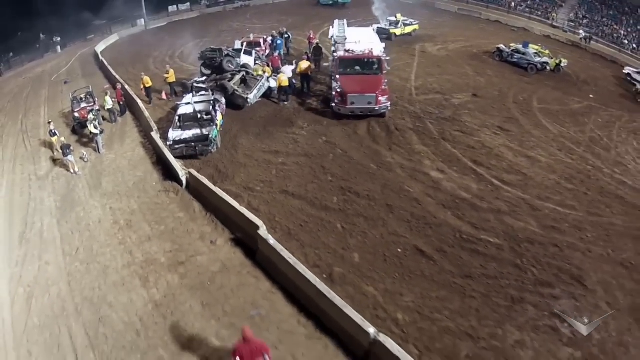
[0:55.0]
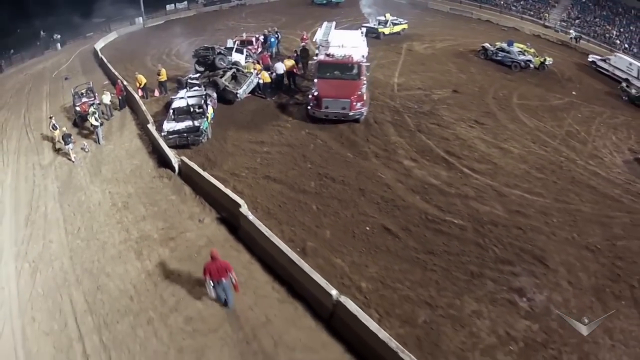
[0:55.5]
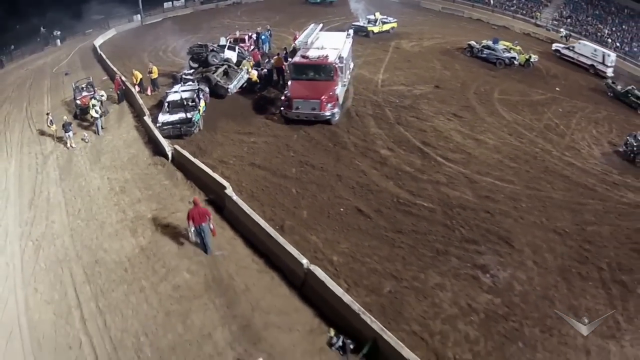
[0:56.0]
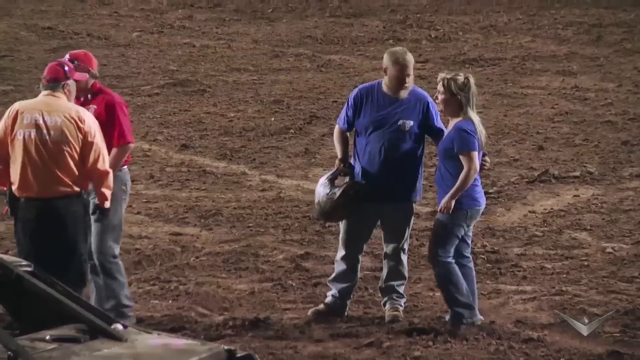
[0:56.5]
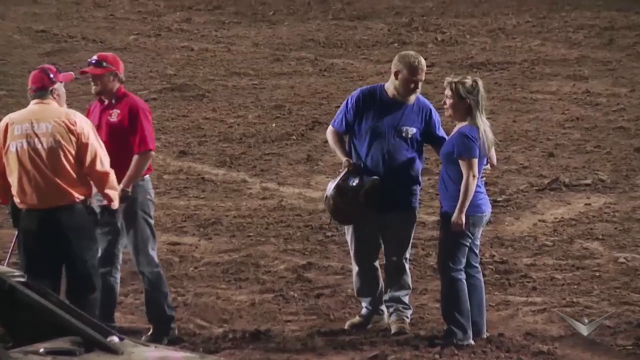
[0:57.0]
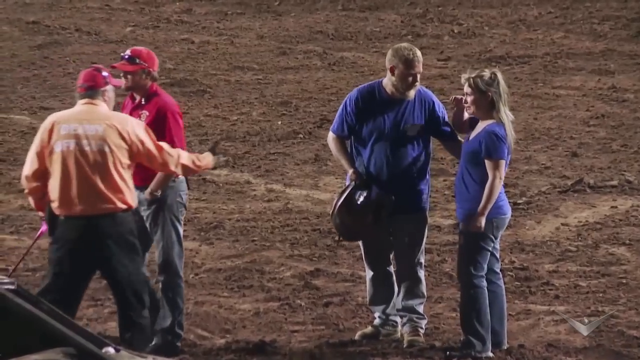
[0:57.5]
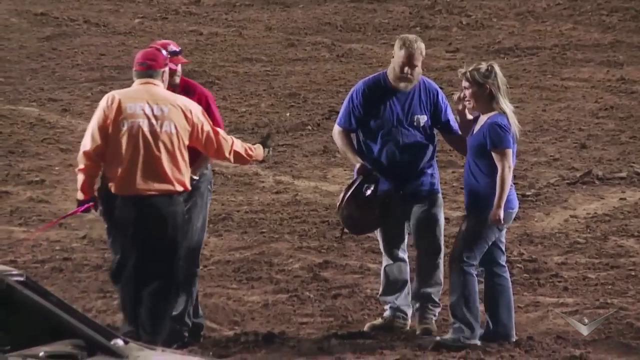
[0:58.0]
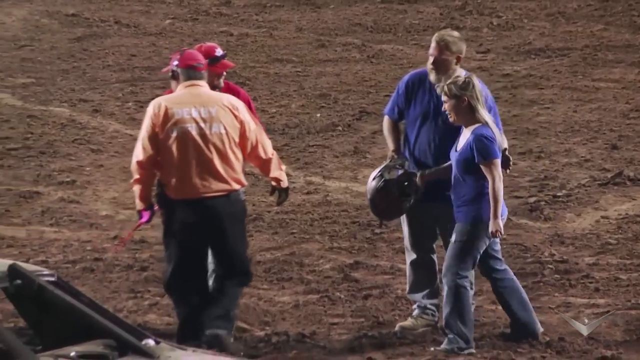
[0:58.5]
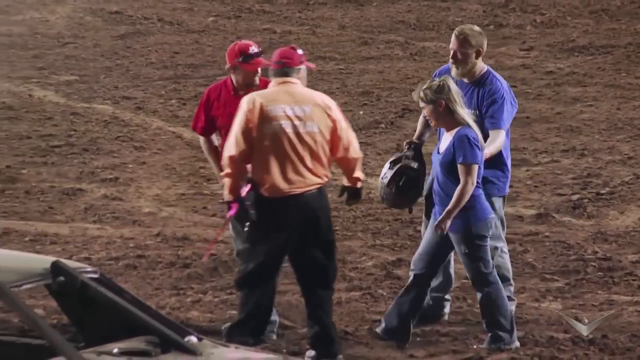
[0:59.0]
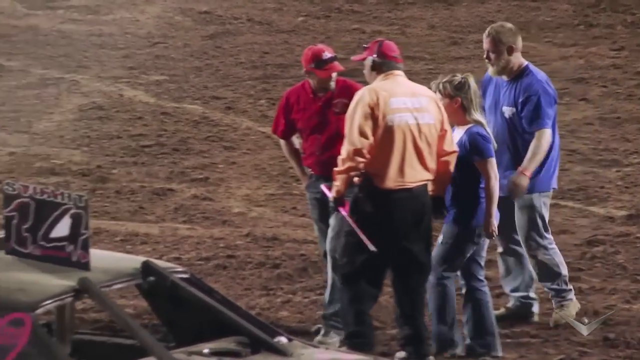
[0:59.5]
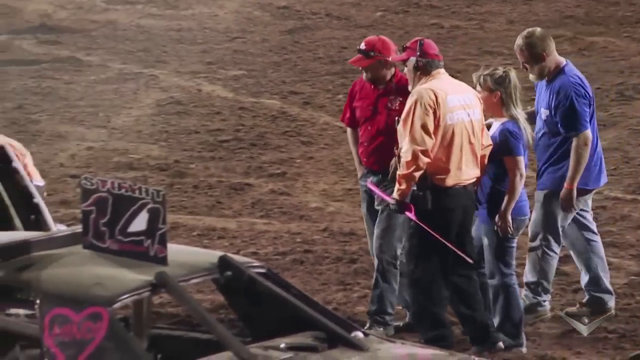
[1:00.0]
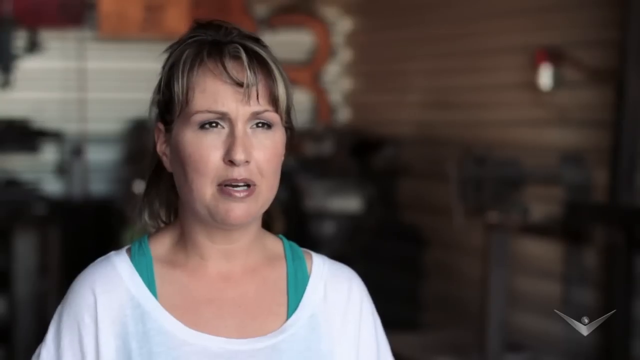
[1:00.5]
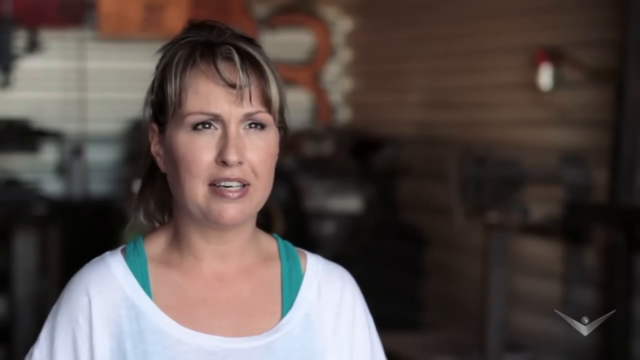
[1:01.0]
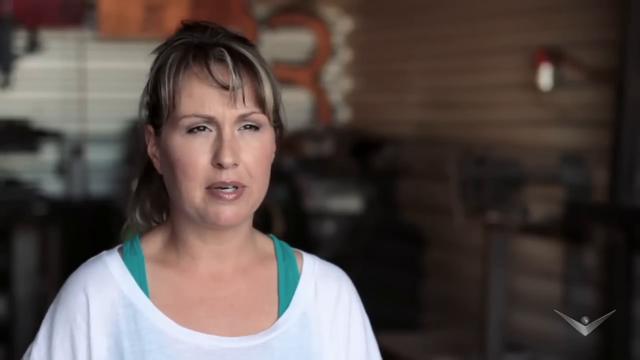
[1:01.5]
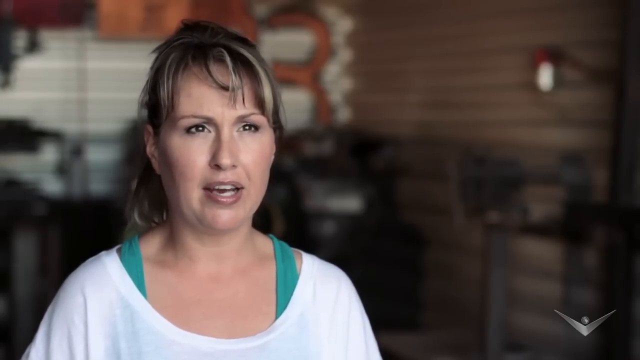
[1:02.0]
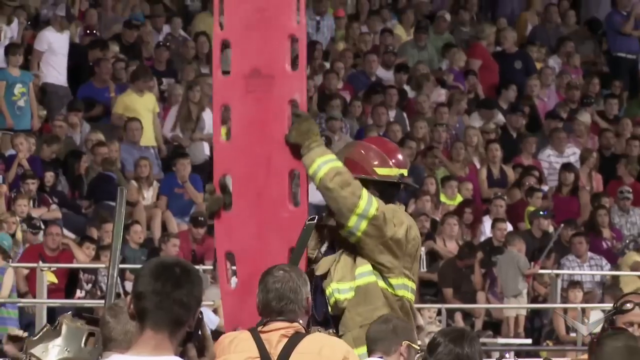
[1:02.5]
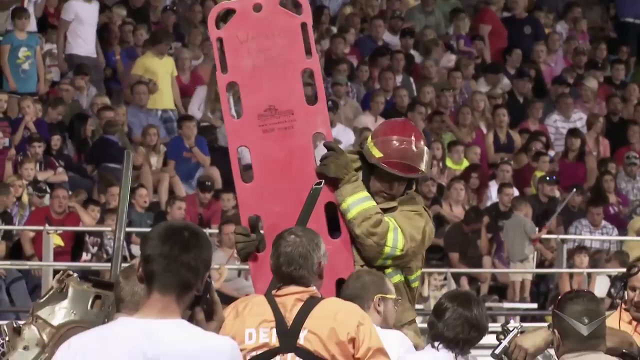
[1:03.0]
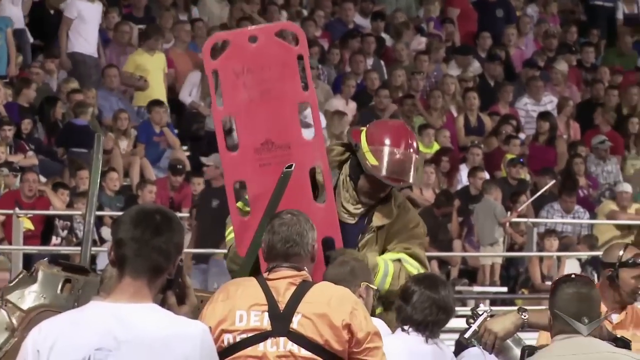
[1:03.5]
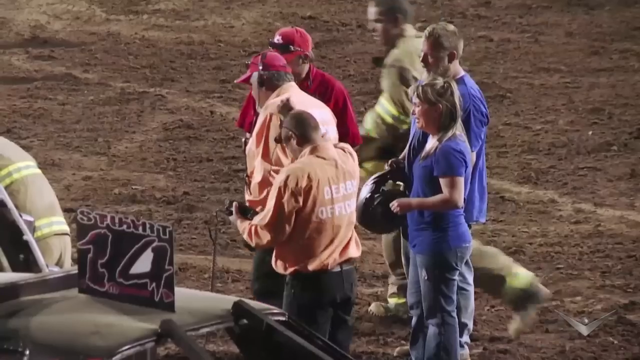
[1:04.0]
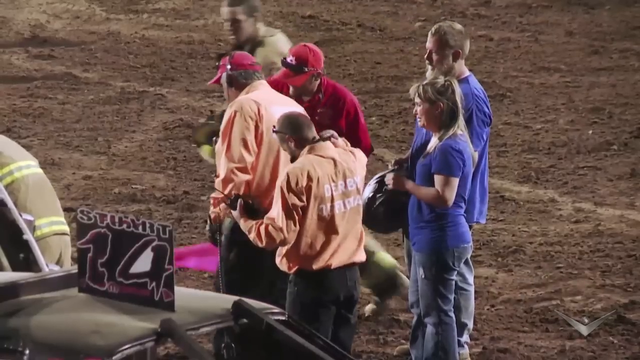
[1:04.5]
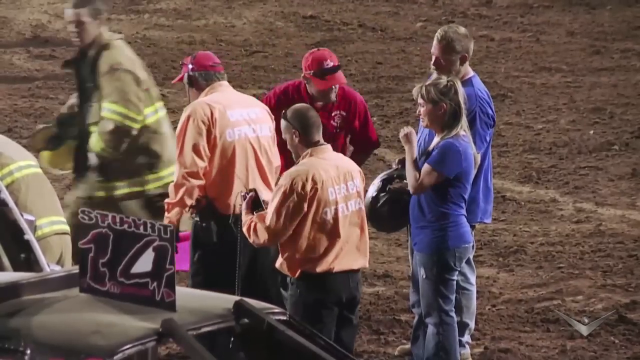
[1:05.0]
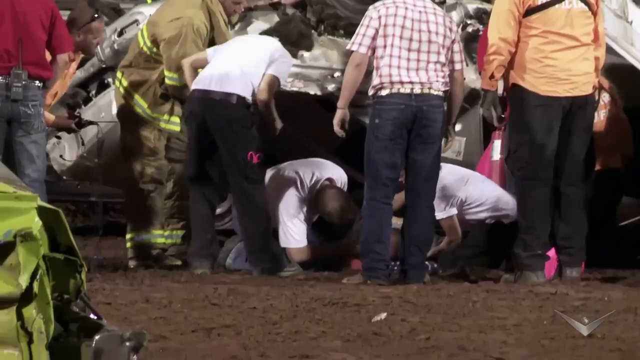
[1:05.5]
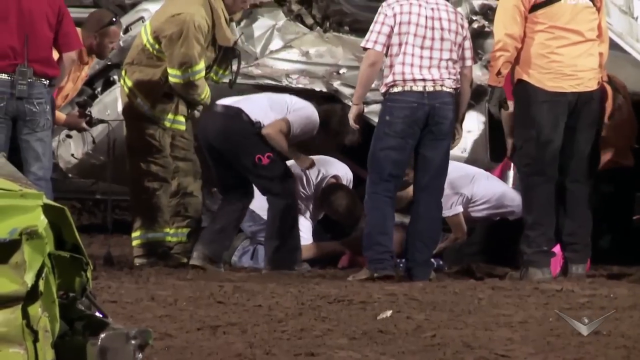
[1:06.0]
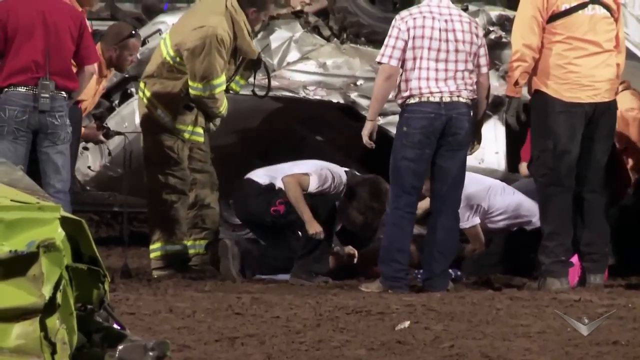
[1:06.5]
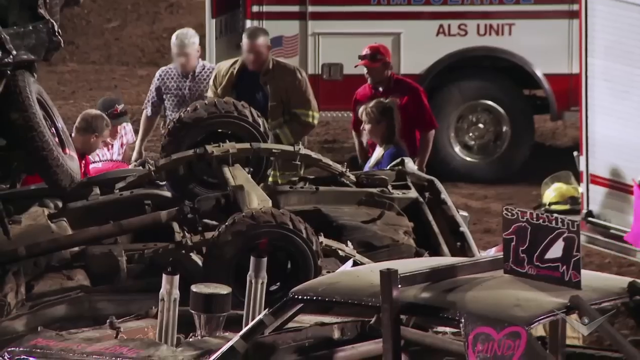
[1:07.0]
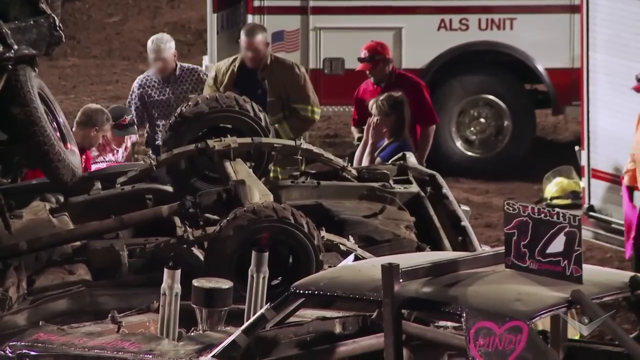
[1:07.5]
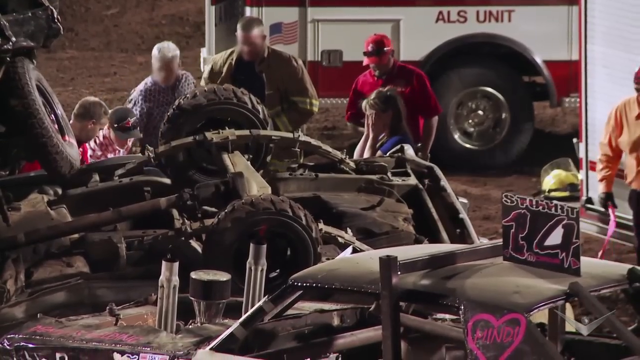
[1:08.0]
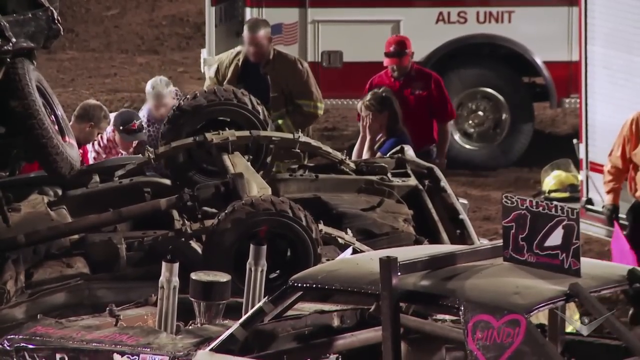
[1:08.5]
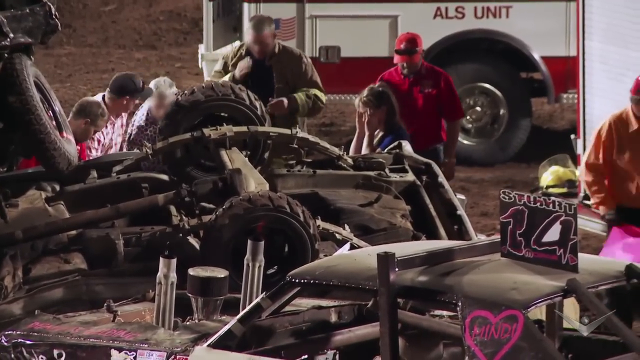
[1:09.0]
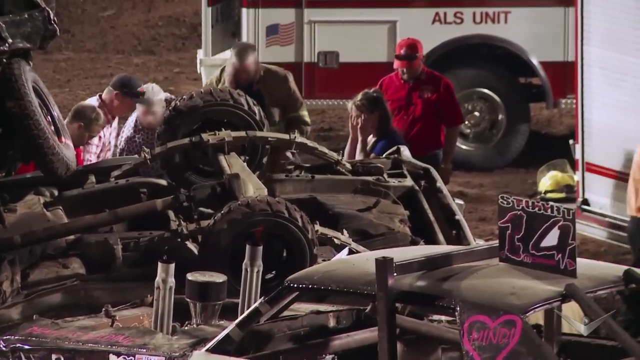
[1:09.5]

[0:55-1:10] The aftermath of the hit is shown. A woman is shown talking. The driver looks to be seriously injured, as firefighters and EMTs use a board to try to get him out. A woman and a man in blue shirts, apparently on the same team, and a man in a red shirt are seen. The woman in the blue shirt looks to be either the driver's partner or a family member; she looks most concerned, very upset and emotional, crying and holding her hands to her head, and looks to be maybe middle-aged. The woman shown talking has darker hair. EMTs appear to have the man on the ground and are talking to him, an ambulance appears to be coming, and the crowd appears silent as they wait.